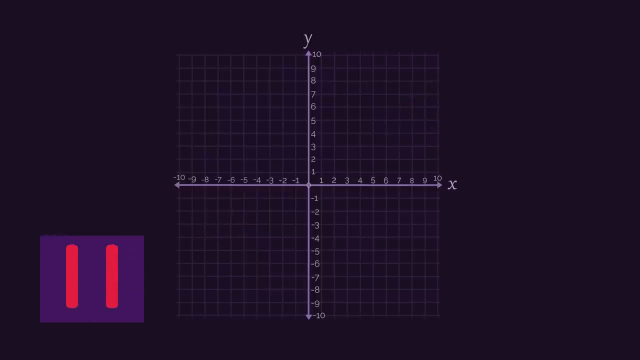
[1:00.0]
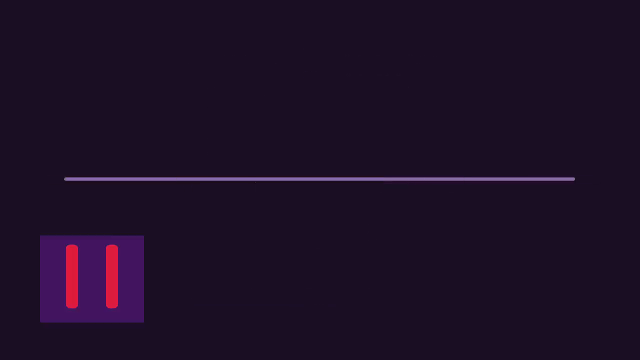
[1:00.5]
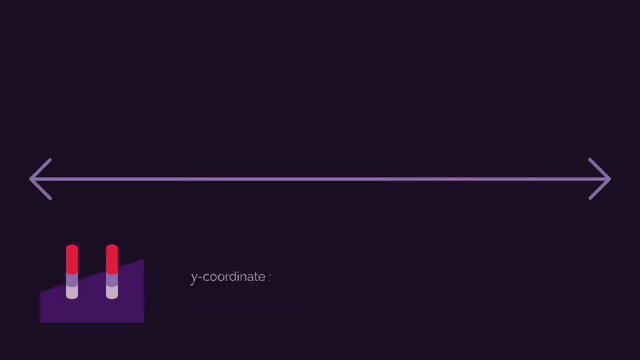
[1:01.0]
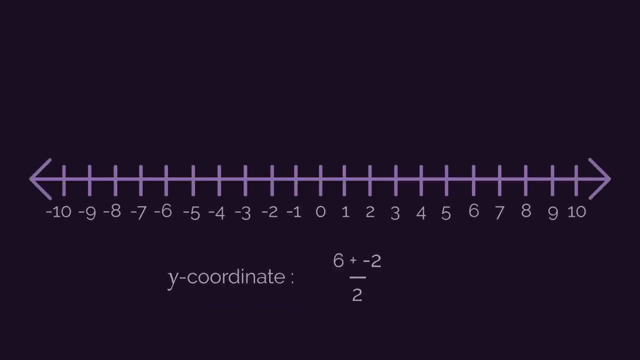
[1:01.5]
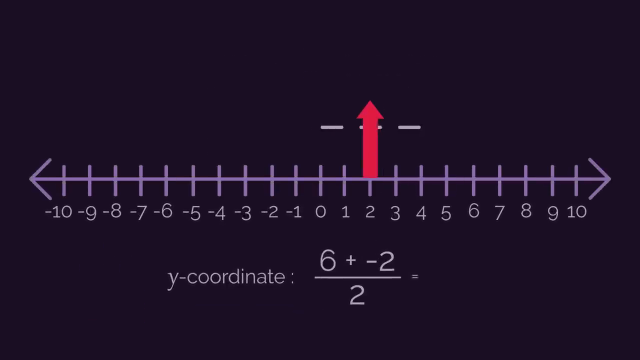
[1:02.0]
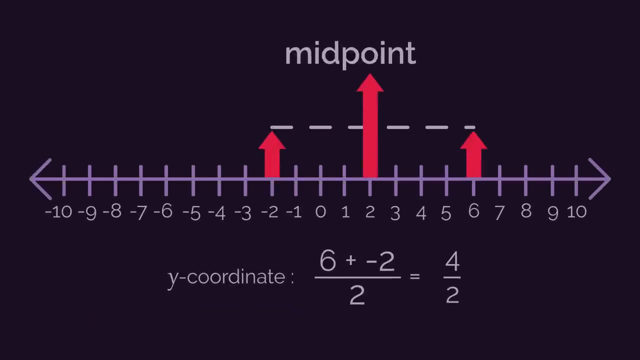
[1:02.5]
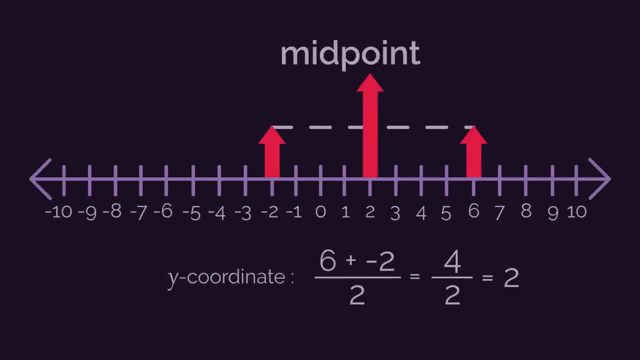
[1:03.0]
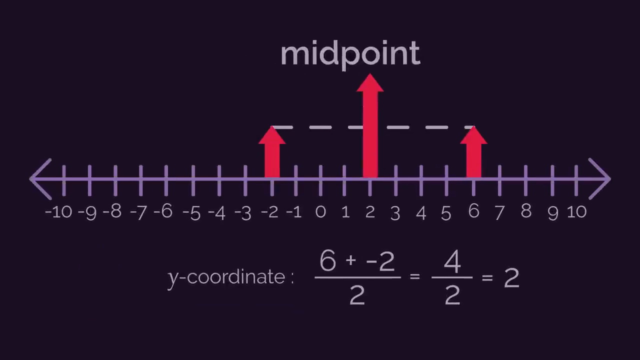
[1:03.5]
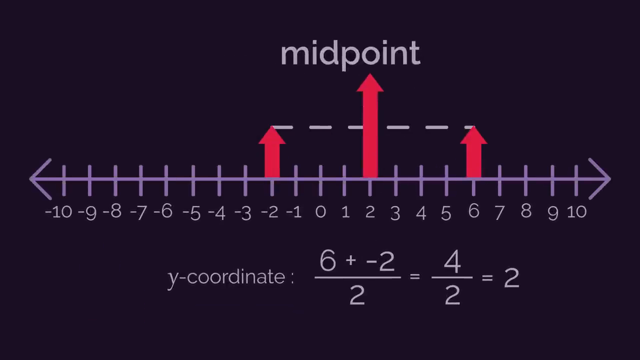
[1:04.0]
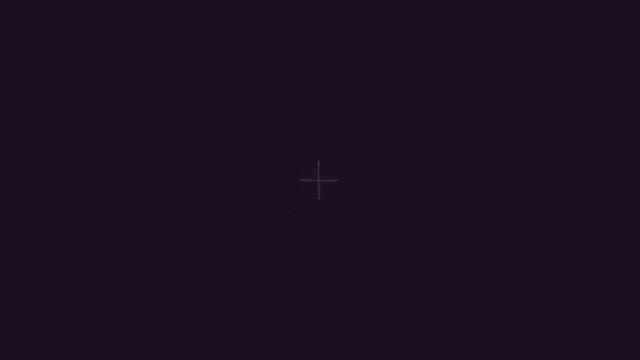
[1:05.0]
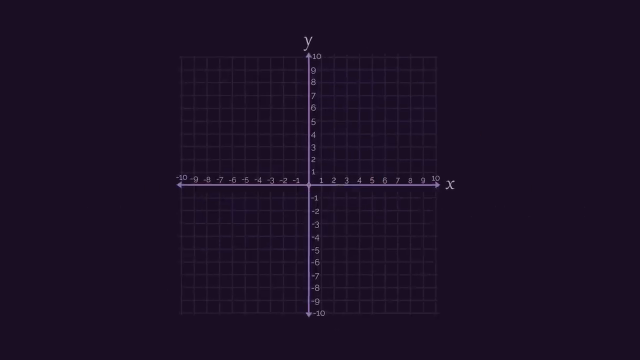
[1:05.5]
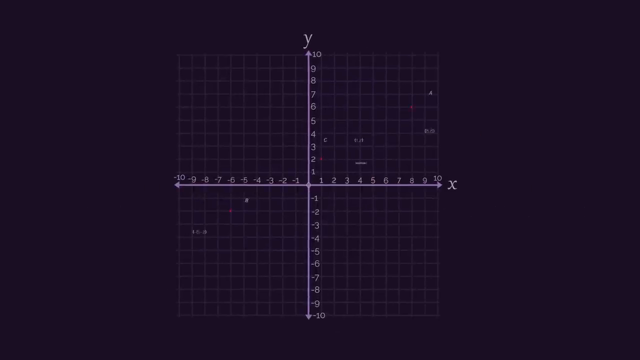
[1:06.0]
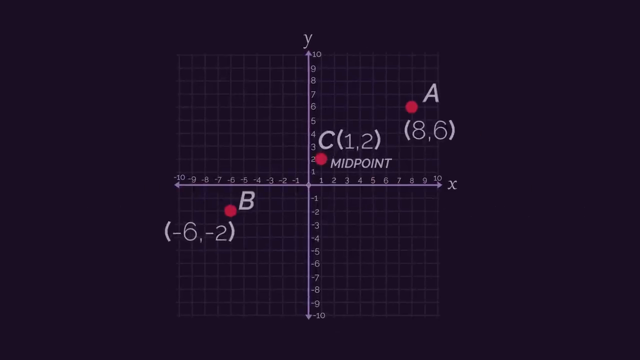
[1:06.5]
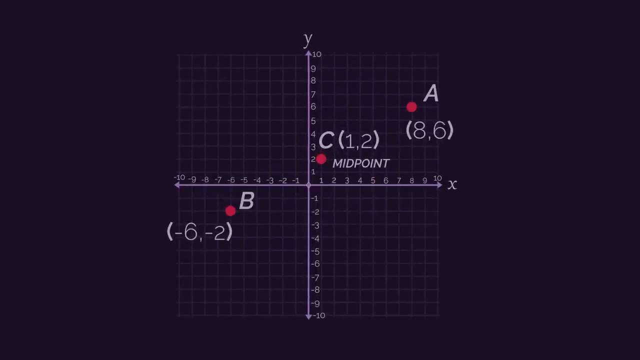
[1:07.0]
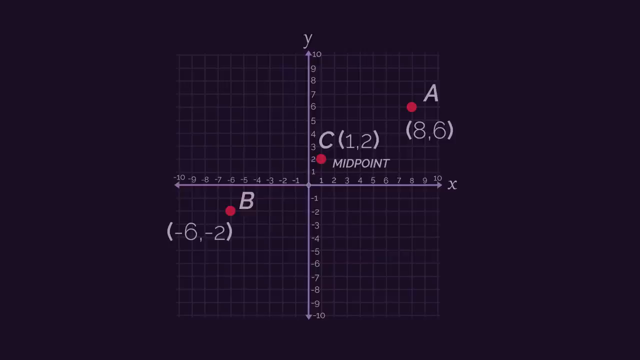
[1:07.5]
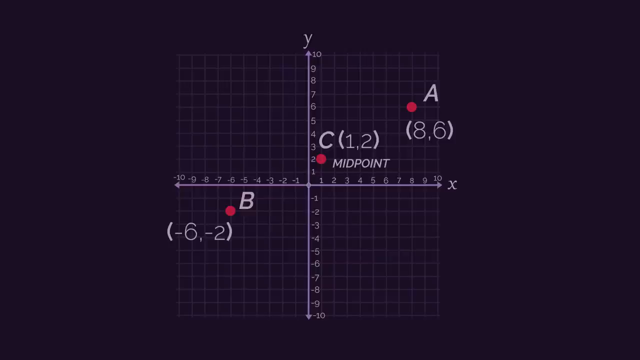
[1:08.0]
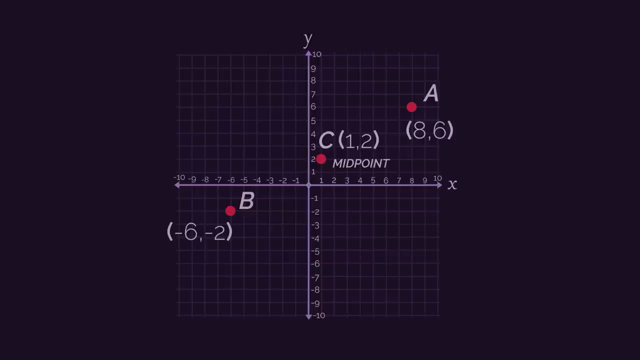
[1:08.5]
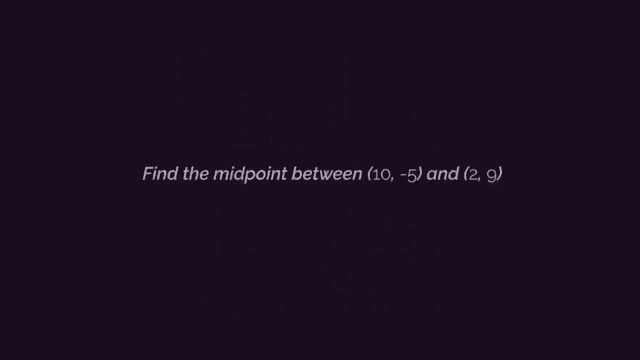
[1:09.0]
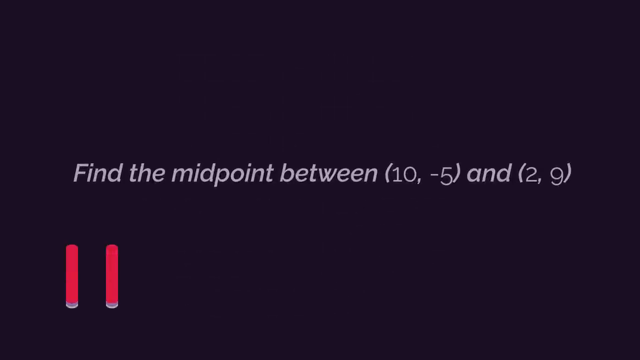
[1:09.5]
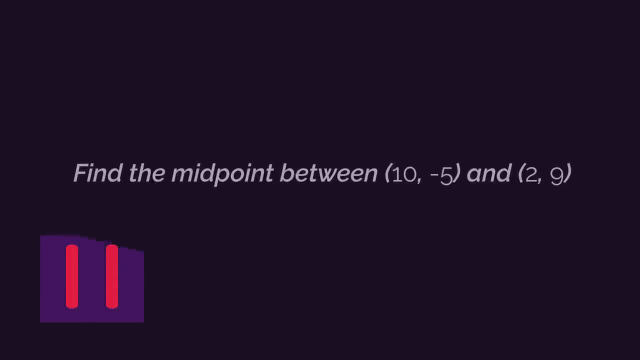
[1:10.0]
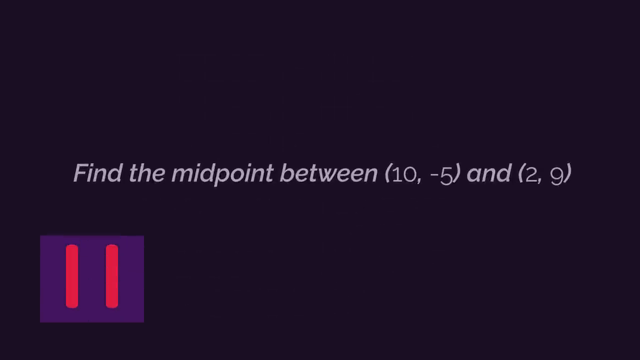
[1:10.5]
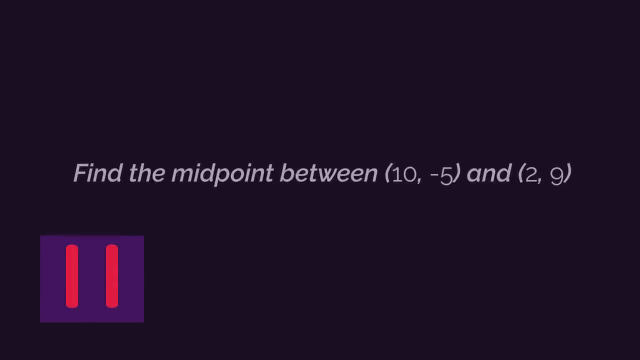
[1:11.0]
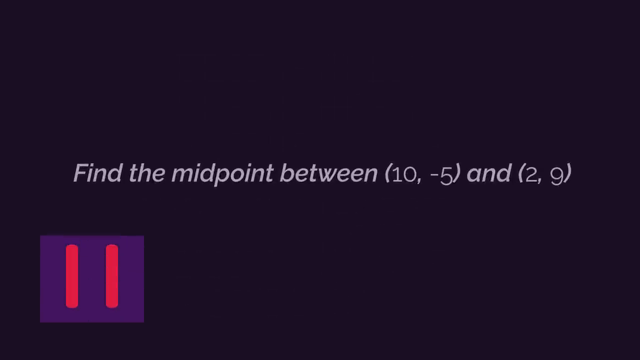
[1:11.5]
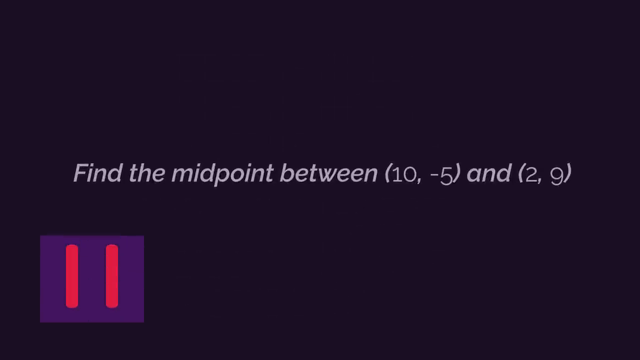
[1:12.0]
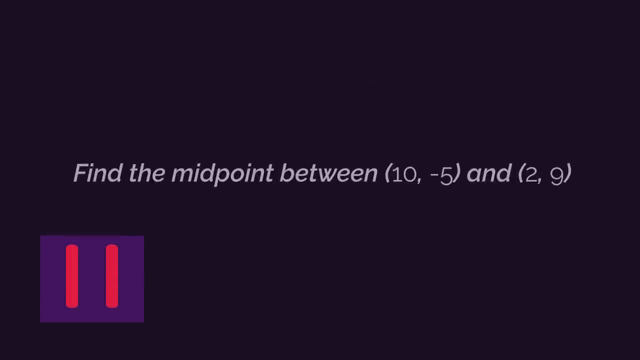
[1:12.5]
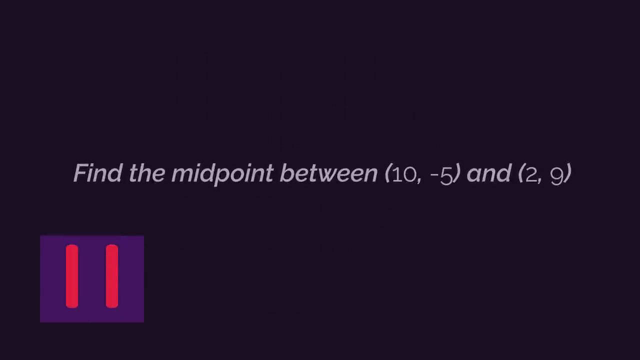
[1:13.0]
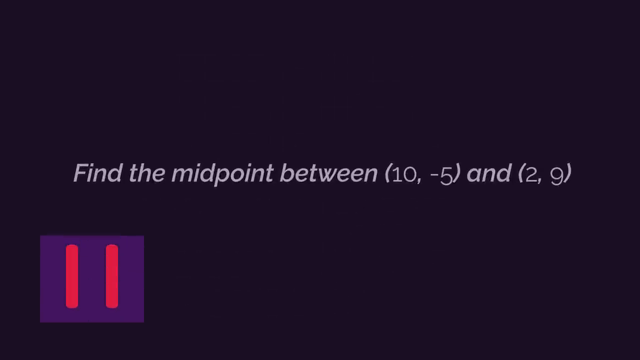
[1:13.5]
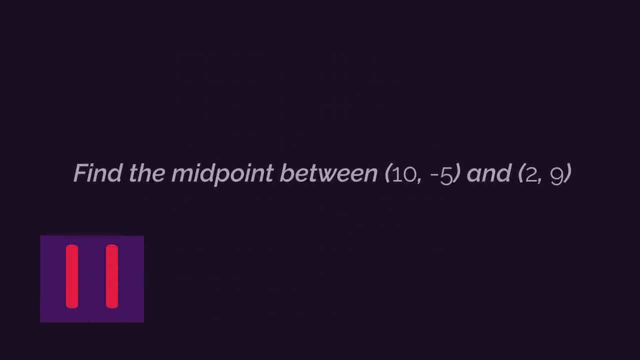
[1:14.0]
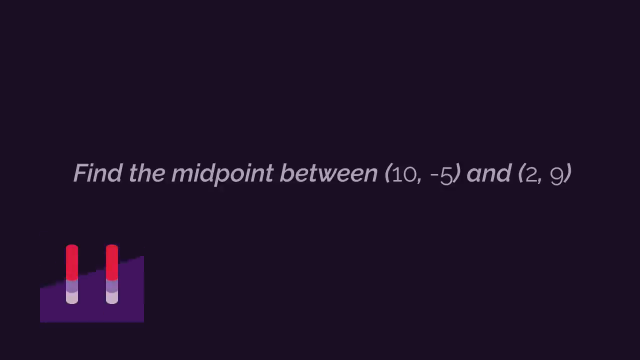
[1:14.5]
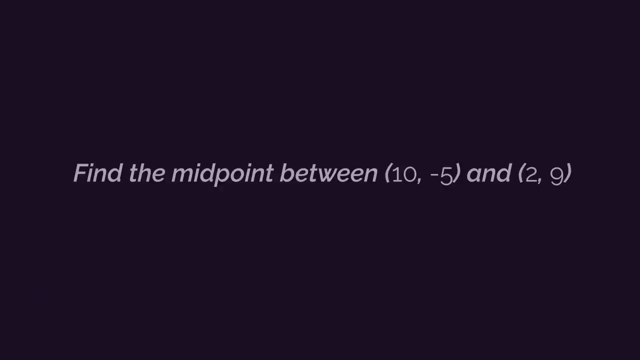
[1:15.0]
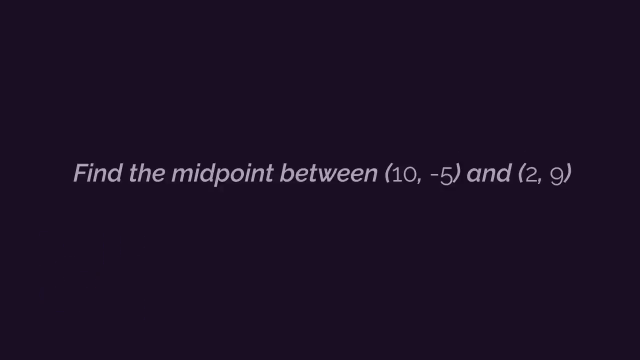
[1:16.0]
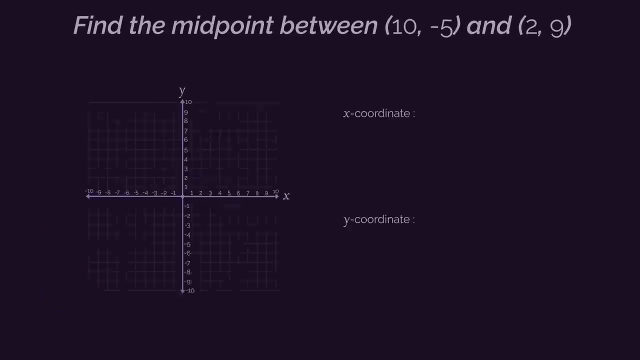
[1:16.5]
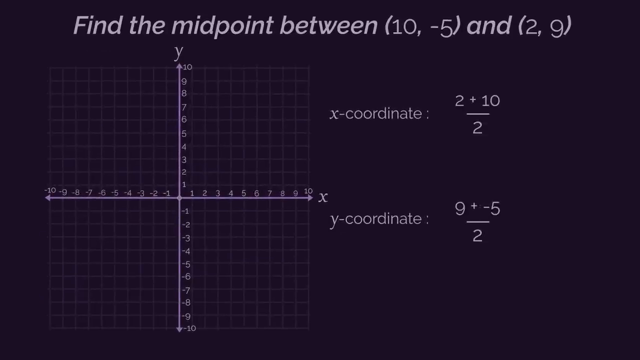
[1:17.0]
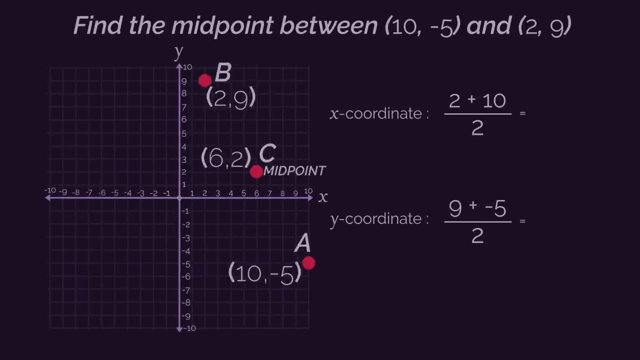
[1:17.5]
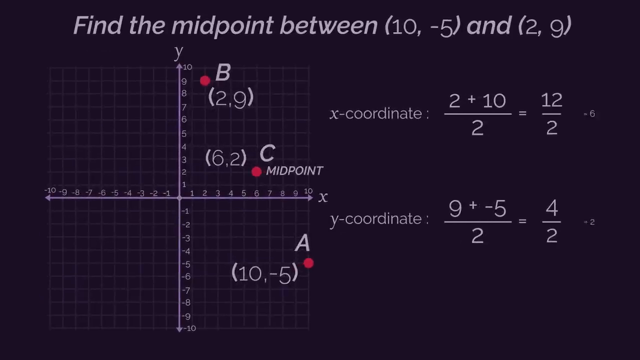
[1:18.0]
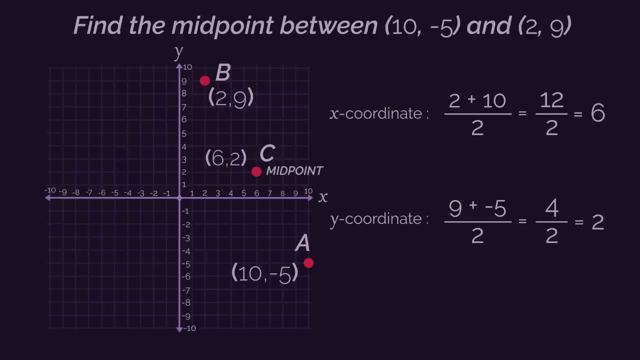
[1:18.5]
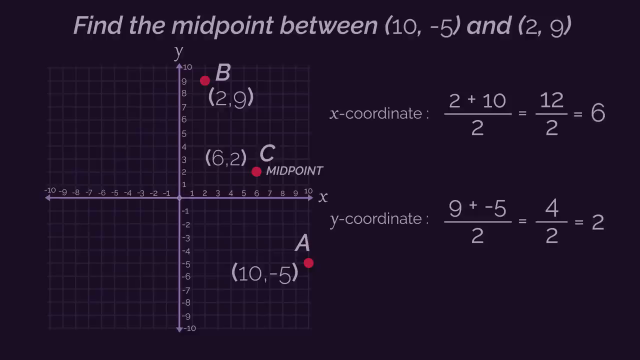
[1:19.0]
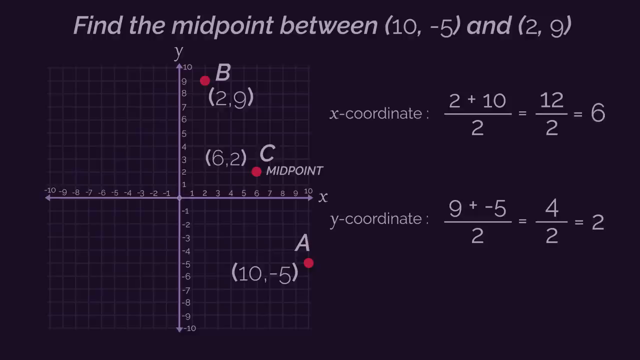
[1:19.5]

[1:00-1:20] The video returns to the number line, running from negative 10 through 10, where negative two and six are plotted, and it shows how to find the midpoint, which is two for the Y coordinate. Back on the graph with point A and point B, the midpoint is plotted and labeled C, at one, two, the X and Y midpoint. Next, a screen in white text on the black background says "find the midpoint between 10, negative five and two, nine". The chart returns, points A and B are plotted, and math on the right of the screen shows how to find and plot midpoint C. Then the chart is shown empty.